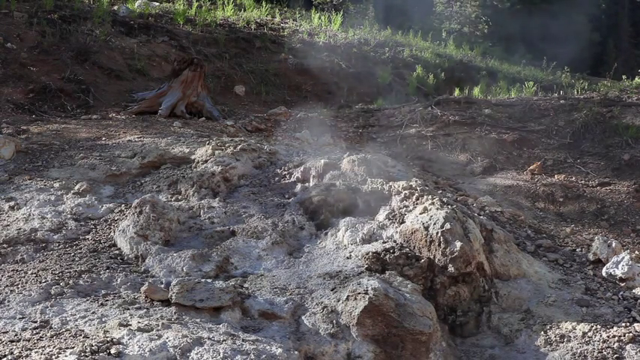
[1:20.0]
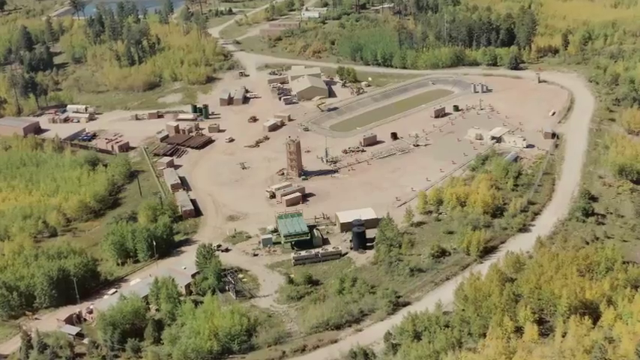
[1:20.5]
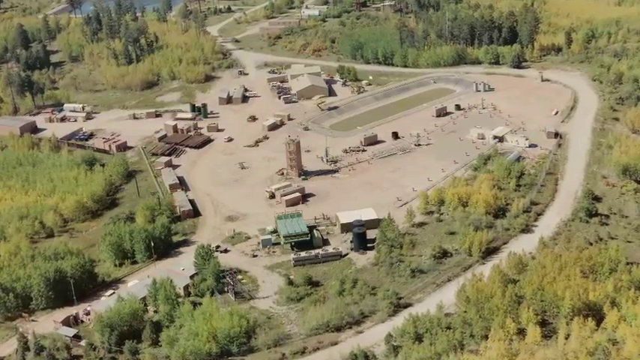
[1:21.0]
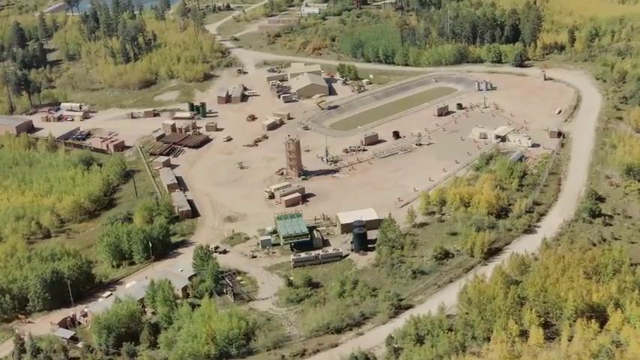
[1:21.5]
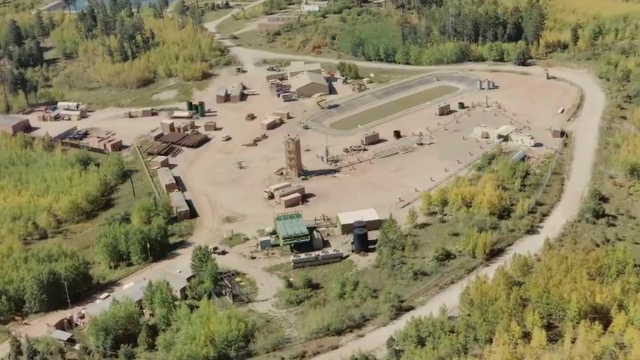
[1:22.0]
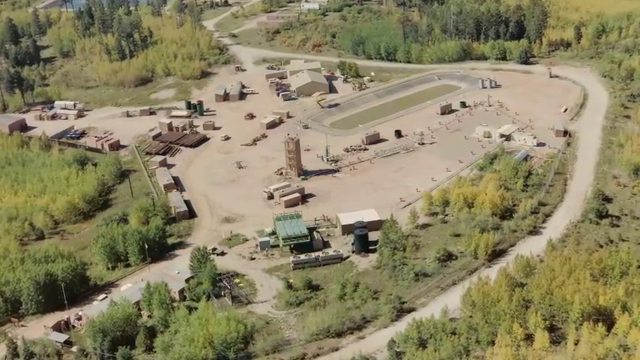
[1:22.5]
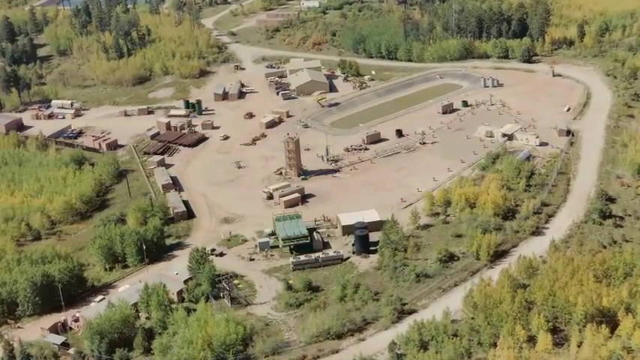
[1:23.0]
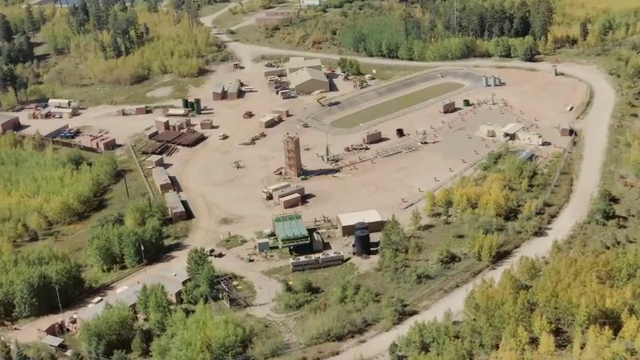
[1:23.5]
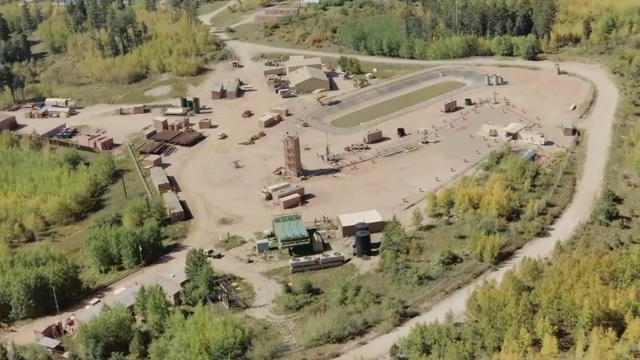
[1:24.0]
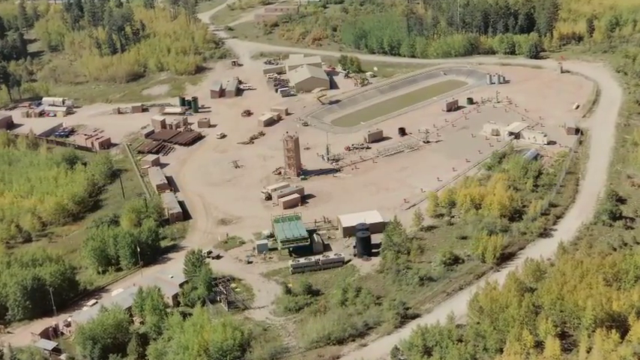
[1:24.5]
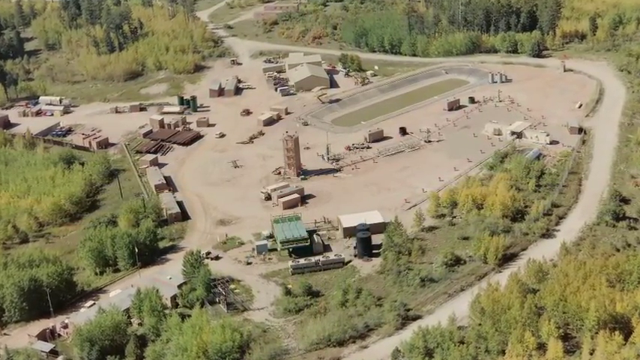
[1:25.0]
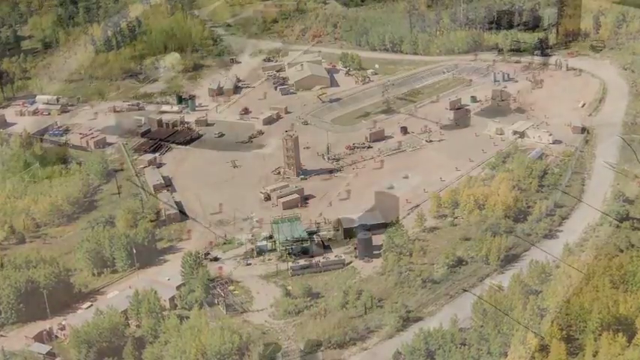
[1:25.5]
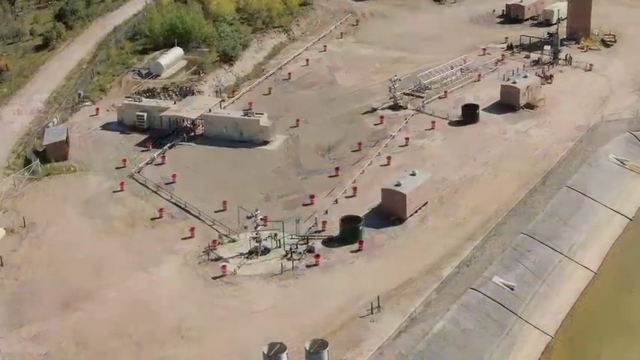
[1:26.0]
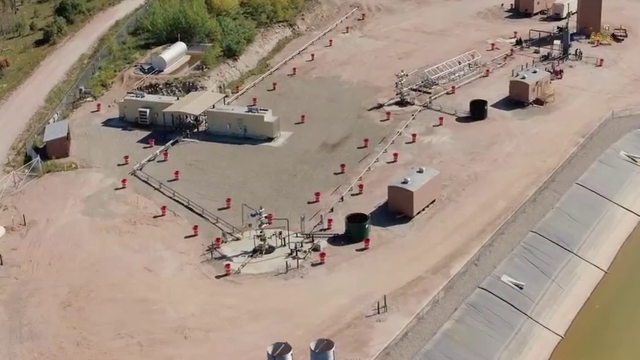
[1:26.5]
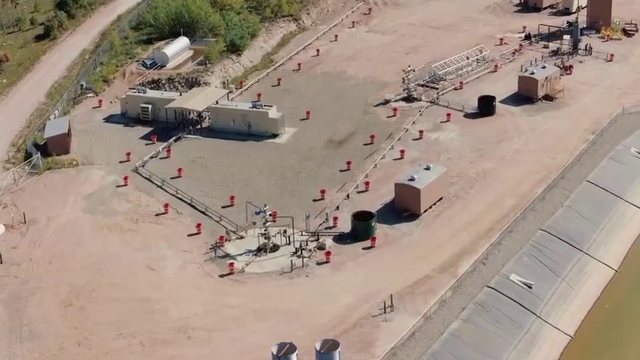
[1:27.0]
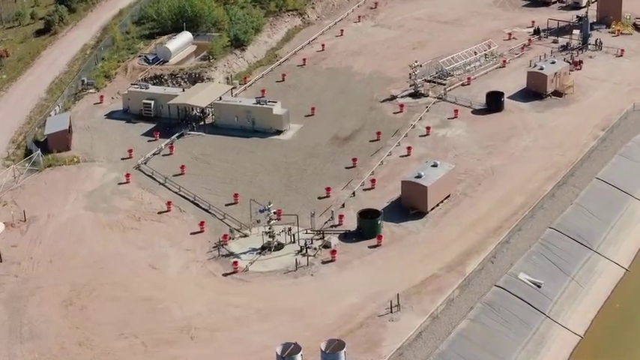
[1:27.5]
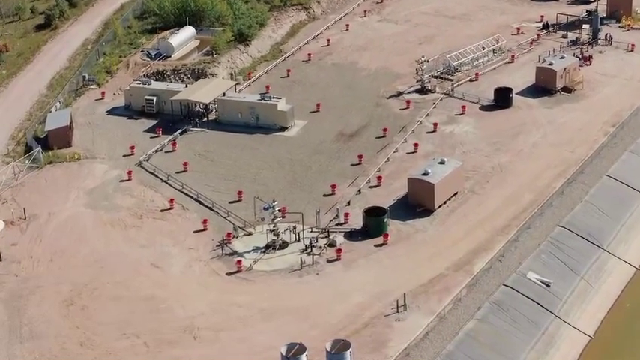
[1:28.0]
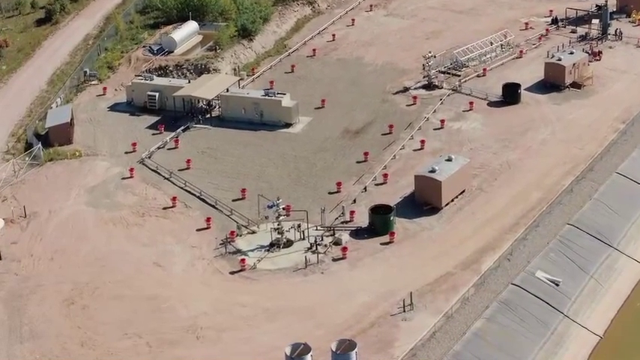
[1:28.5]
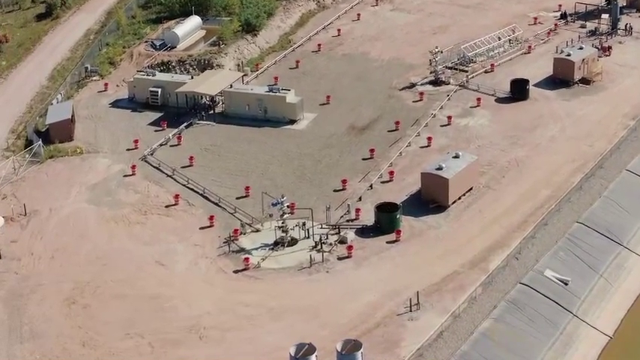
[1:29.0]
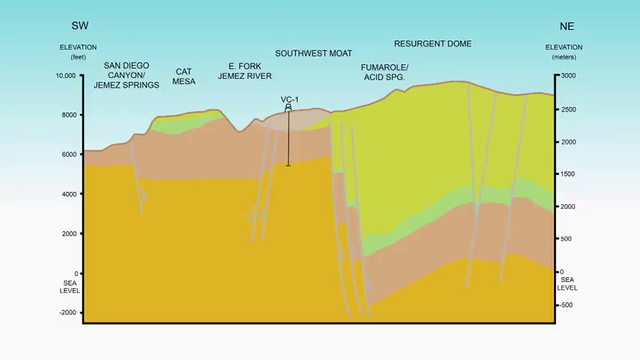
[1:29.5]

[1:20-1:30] Many rocks with holes in them are in the ground, with steam and smoke coming out of the ground. It cuts to a still image of what looks to be a large forest area with trees, where people are building buildings and different types of things inside the forest area. The land they have dug up is brown, and they have planted things in the ground. The area looks to be used for research or as company property, and there is housing.